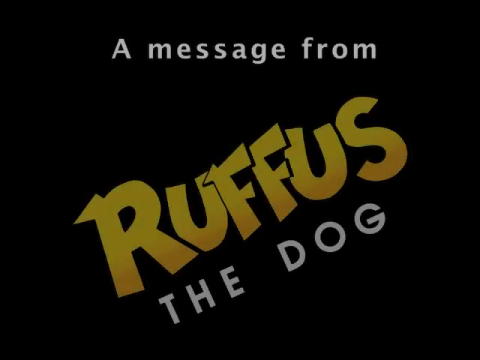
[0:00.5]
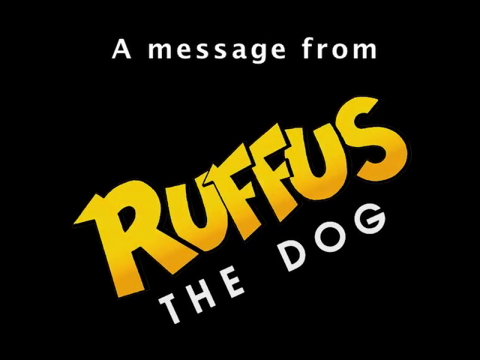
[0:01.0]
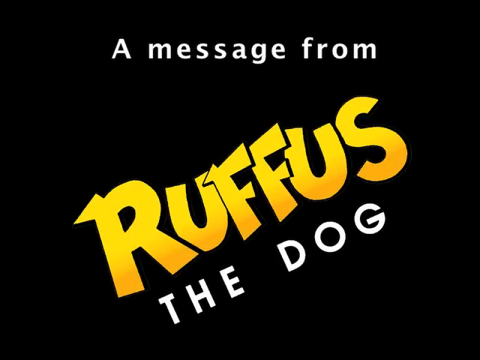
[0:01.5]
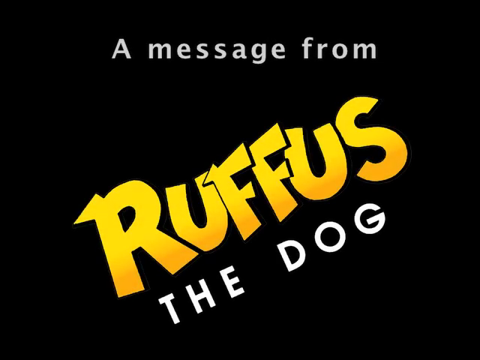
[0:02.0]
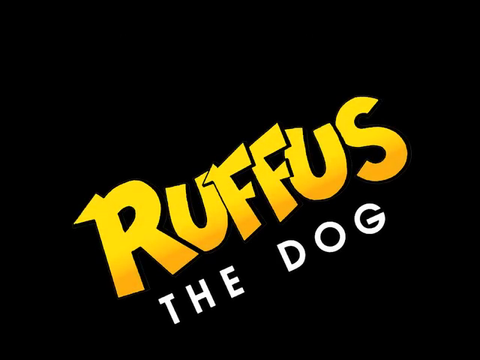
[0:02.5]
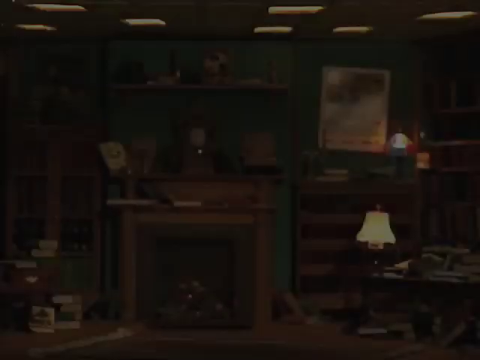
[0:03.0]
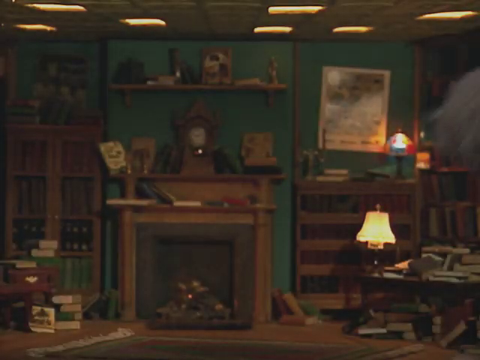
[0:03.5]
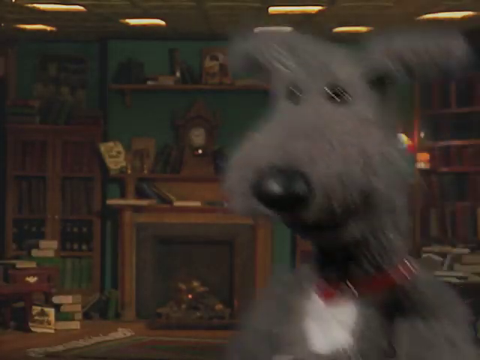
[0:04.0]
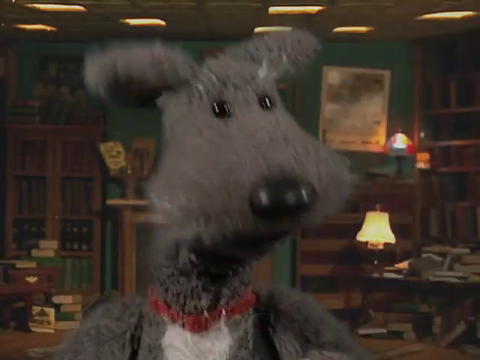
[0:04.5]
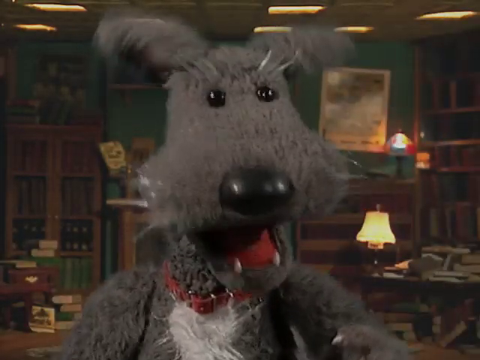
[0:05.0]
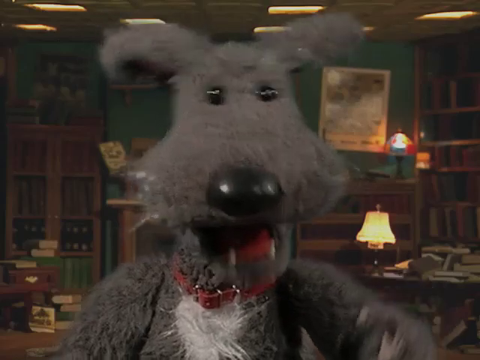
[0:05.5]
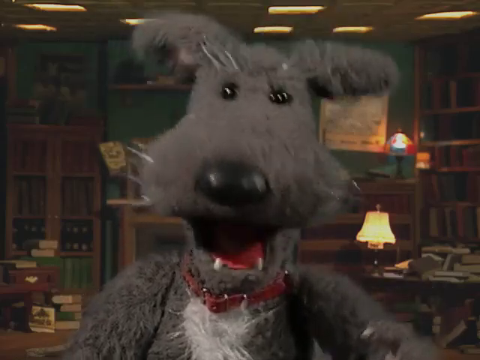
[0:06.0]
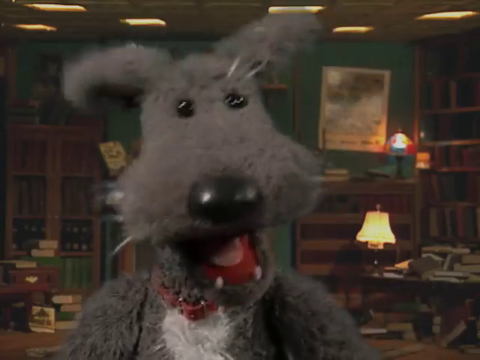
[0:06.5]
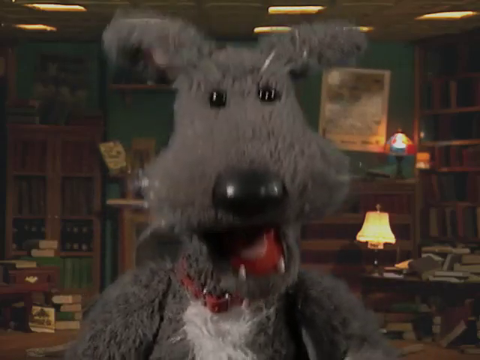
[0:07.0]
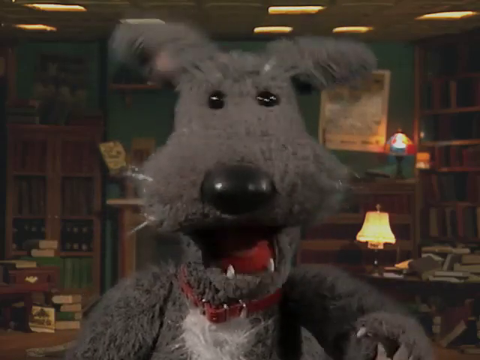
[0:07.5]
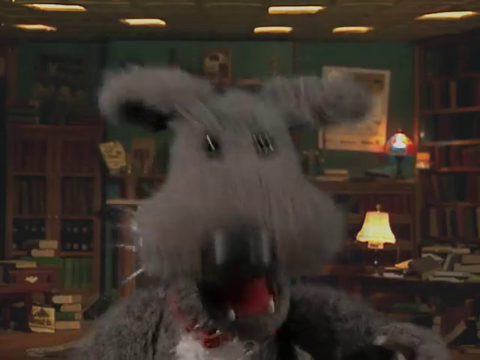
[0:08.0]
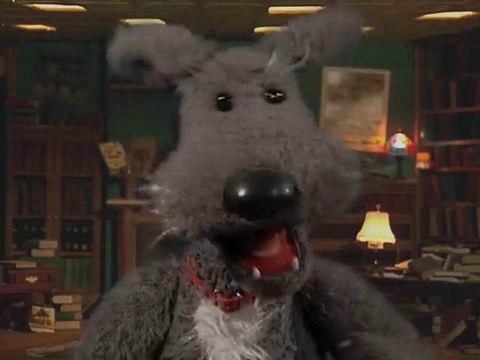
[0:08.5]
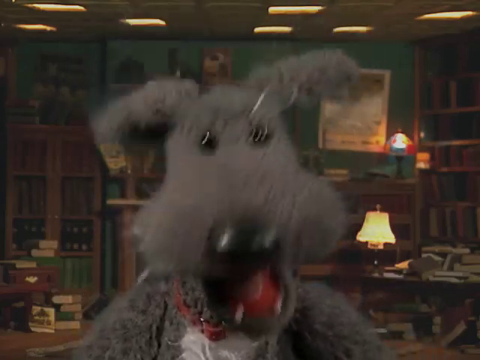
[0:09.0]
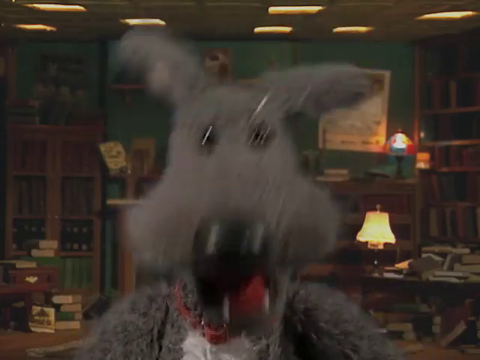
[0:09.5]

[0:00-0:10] A black screen opens the video, and text appears reading "A message from Rufus the dog", with the word Rufus stylized in a special font and colored yellow. The image changes to a live-action shot of a room with a number of books, a lamp, a desk and more. A dog that appears to be a puppet comes into frame, centering on the camera. It is gray, with a black nose and eyes, and has a red collar around its neck. The dog looks into the camera and starts to talk, its hands sometimes making gestures.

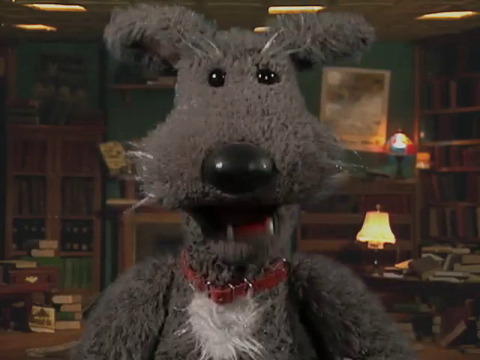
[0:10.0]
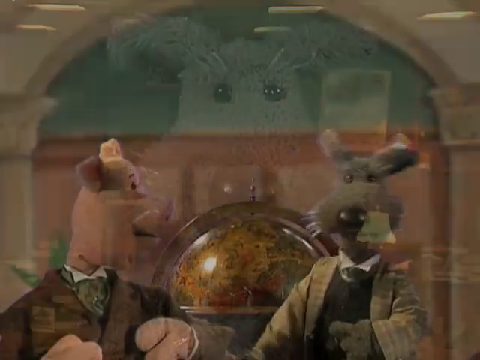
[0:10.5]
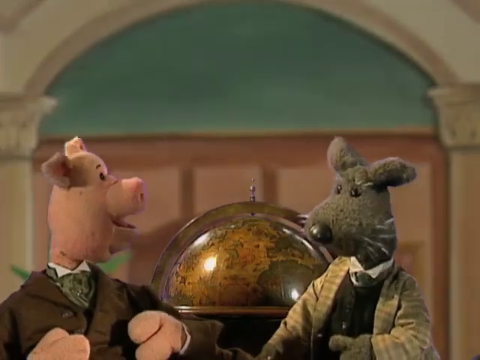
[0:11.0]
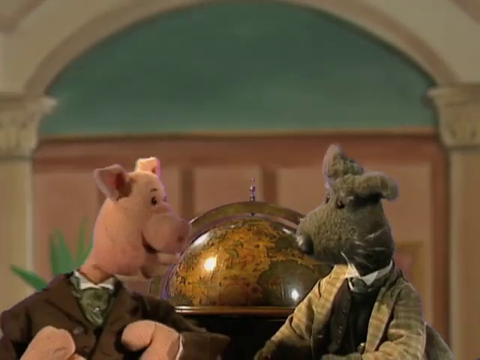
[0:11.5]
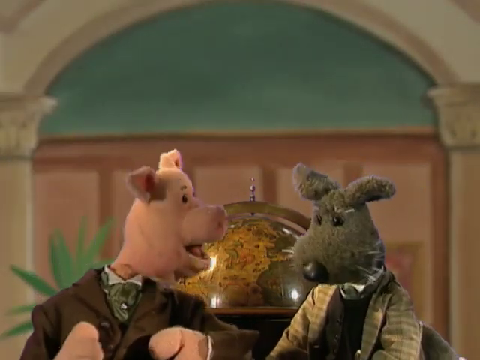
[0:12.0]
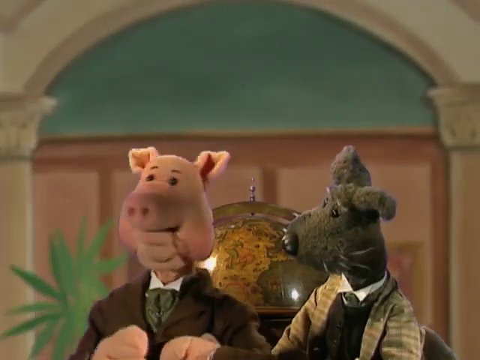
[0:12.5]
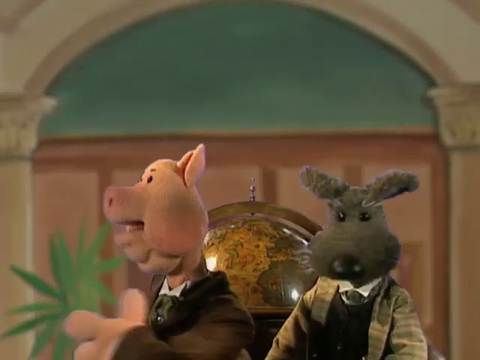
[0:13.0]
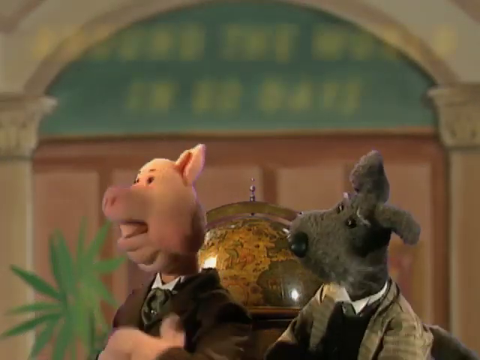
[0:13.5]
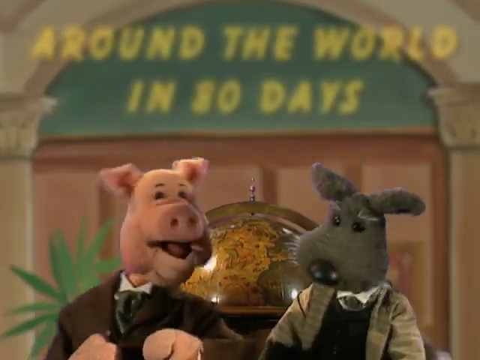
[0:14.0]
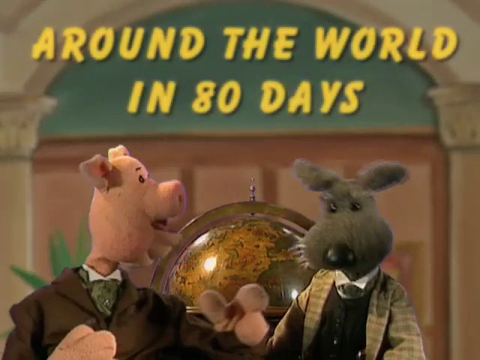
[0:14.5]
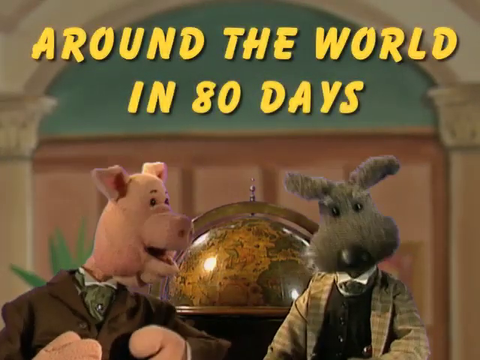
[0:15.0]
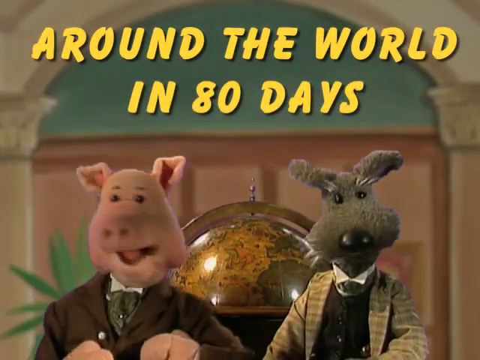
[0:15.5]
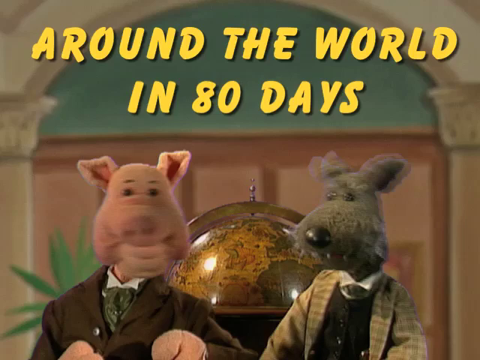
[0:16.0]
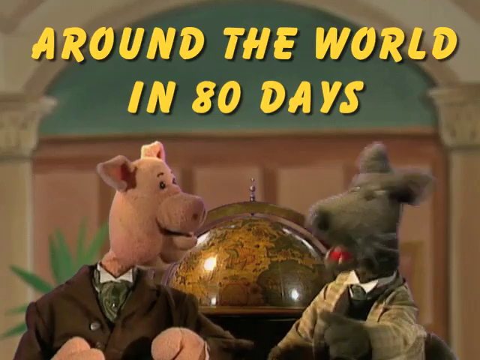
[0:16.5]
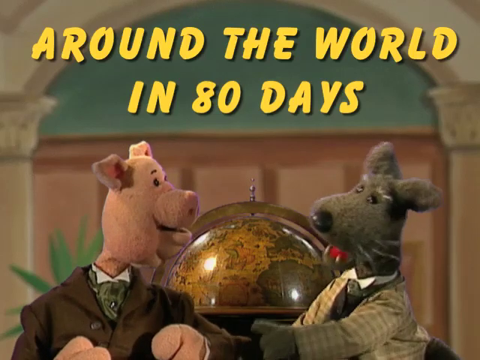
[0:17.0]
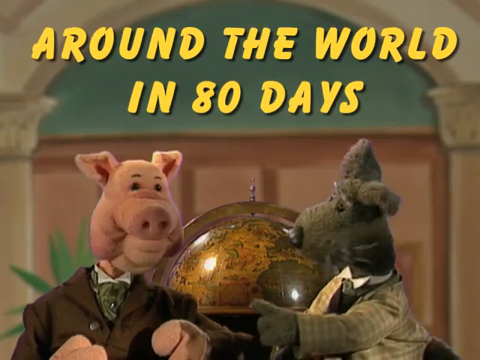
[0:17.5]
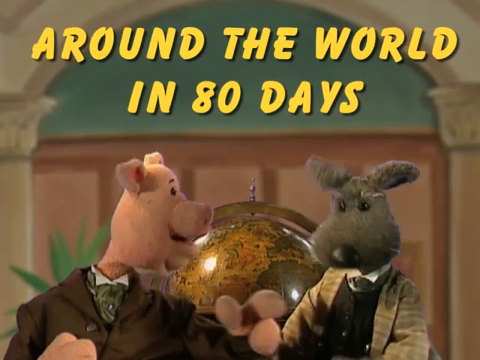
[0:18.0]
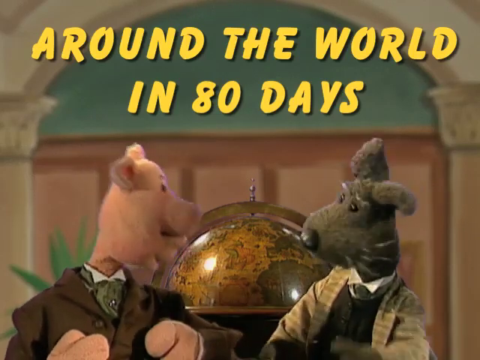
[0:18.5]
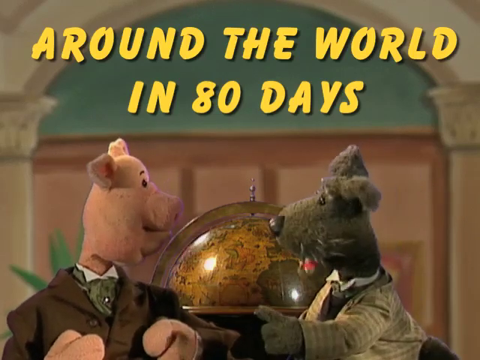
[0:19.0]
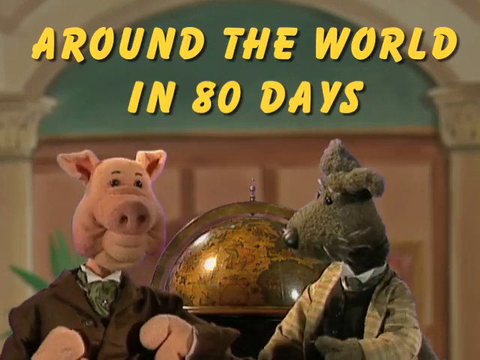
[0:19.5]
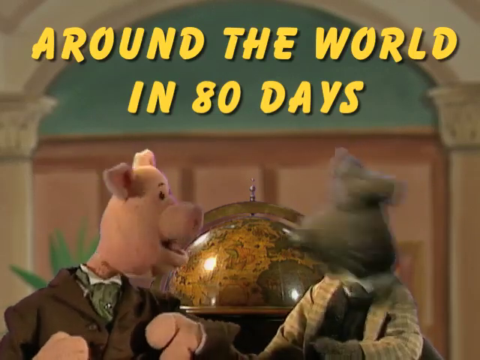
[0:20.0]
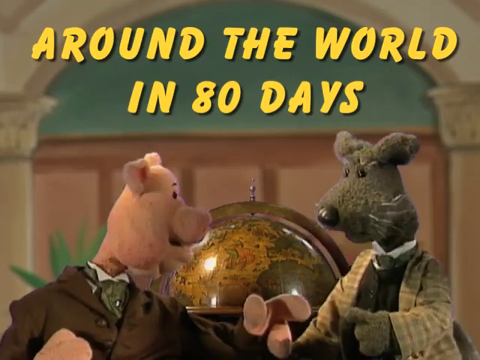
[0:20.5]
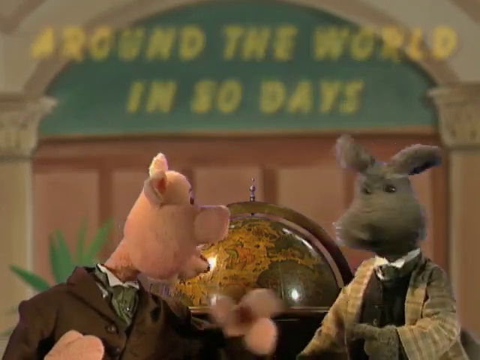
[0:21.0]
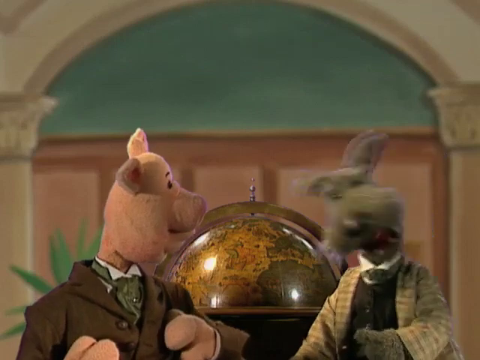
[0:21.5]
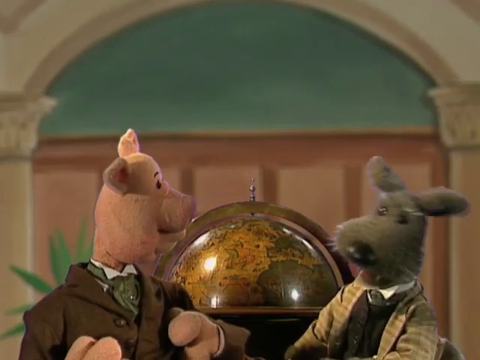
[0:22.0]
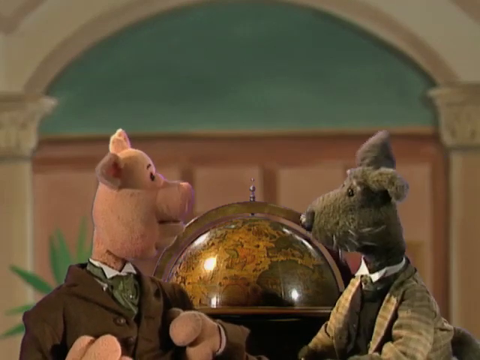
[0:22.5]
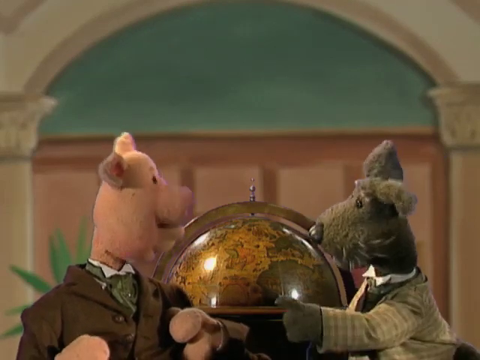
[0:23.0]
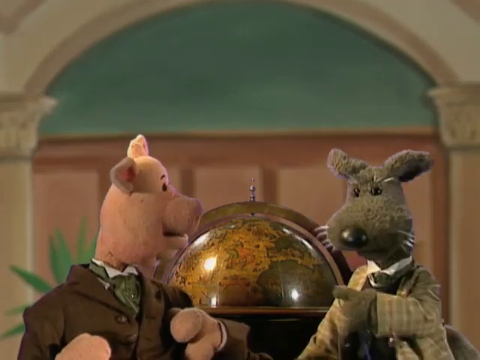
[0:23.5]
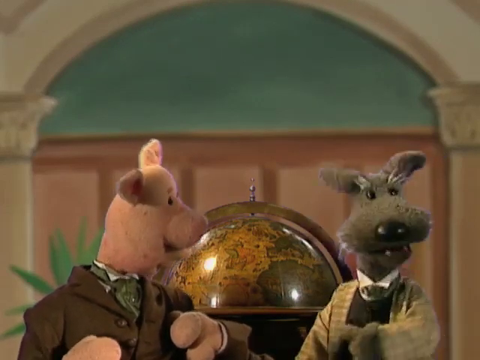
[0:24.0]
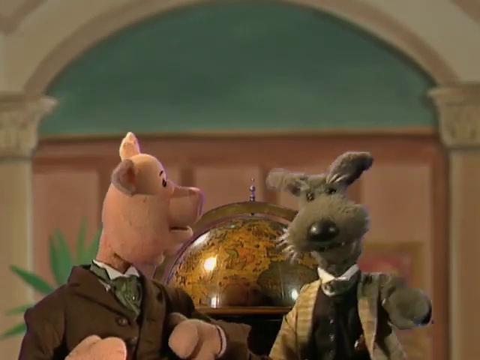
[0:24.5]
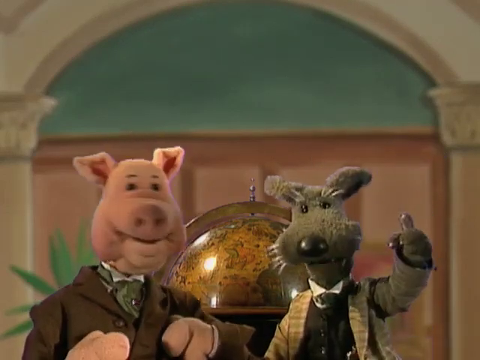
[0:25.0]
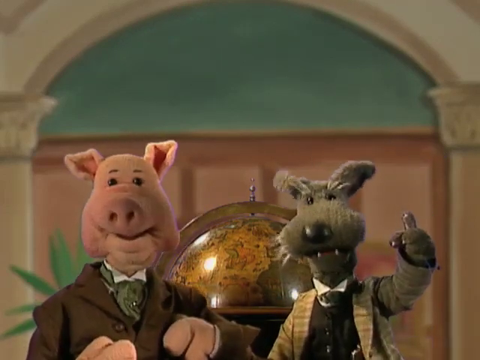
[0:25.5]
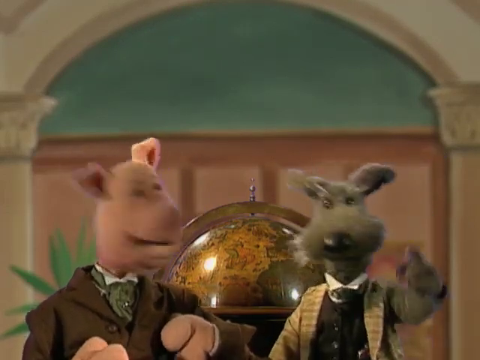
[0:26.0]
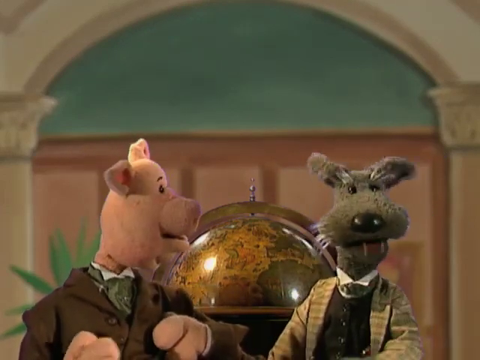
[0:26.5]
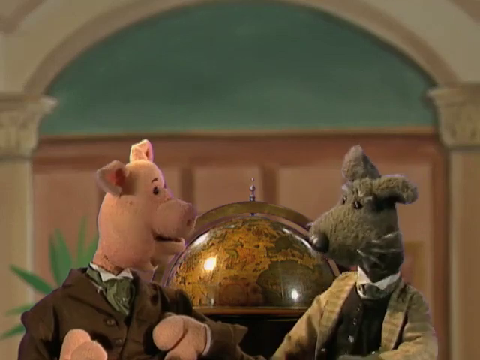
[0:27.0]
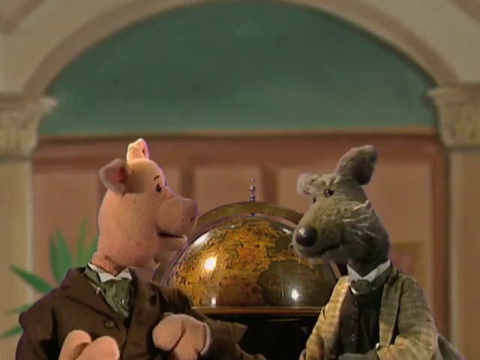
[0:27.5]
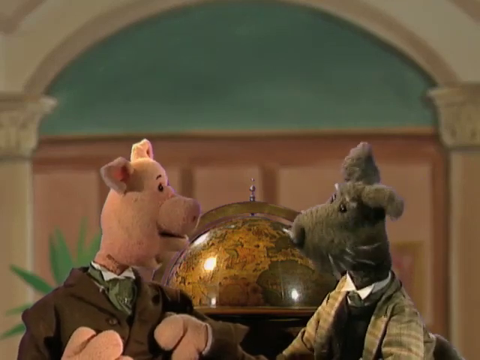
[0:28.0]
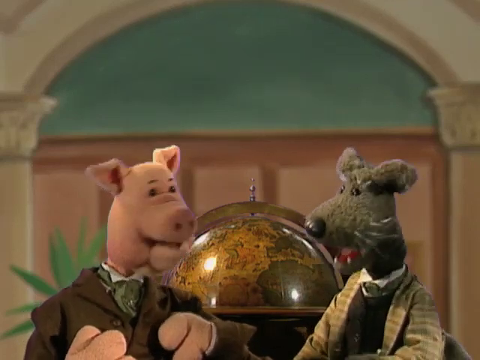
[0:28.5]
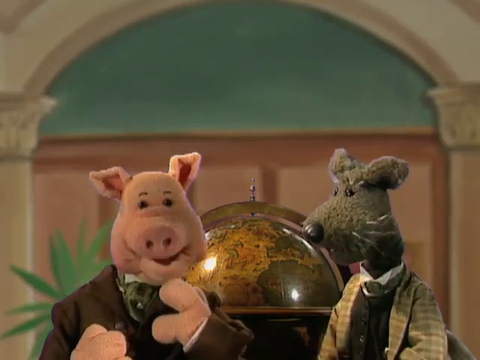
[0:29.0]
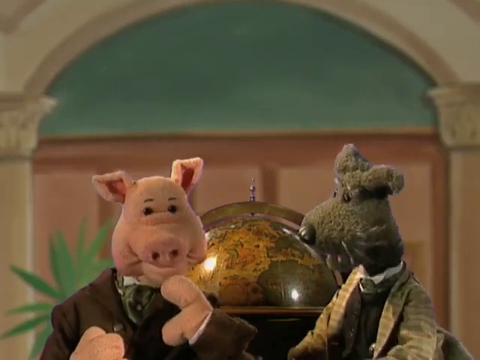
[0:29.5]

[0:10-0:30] A puppet dog with black eyes, a black nose and a red collar around its neck looks into the camera. Behind it are a number of books on bookshelves, as well as a desk with a lamp and more. The video cuts away to two other puppets: a pig, and what seems to be the same dog from before. Both wear clothes from the neck down. Behind them is a large globe, and the rest of the room is simple and nondescript. The characters look around and talk to each other while gesturing with their hands. Yellow text comes up reading "Around the world in 80 days". The dog eventually points behind the camera and the pig looks surprised. The pig then seems to think, putting its hand up to its mouth as if deep in thought.